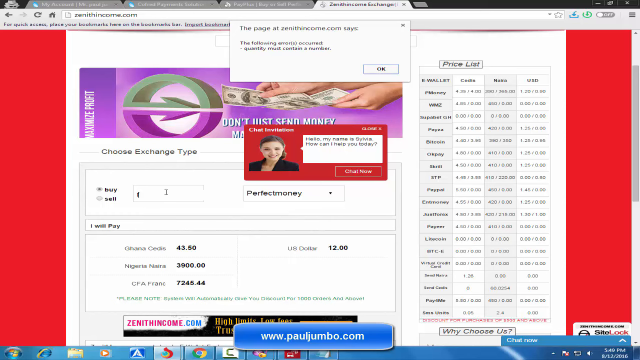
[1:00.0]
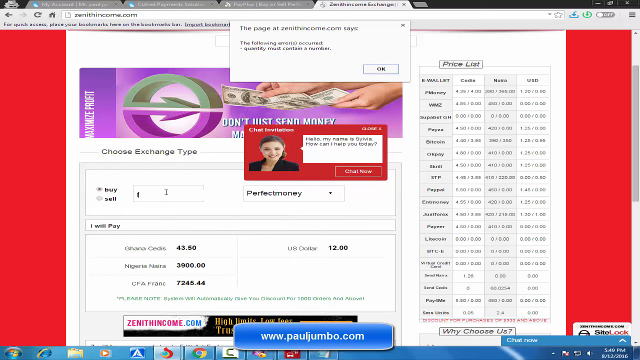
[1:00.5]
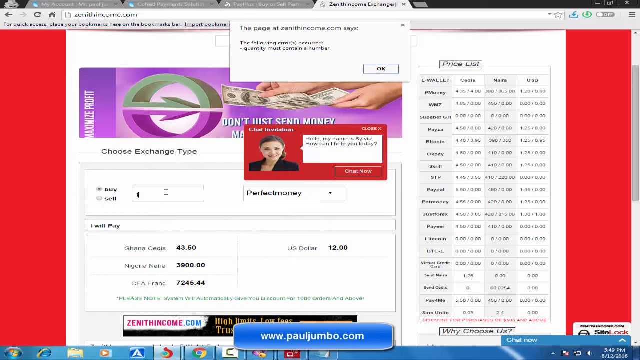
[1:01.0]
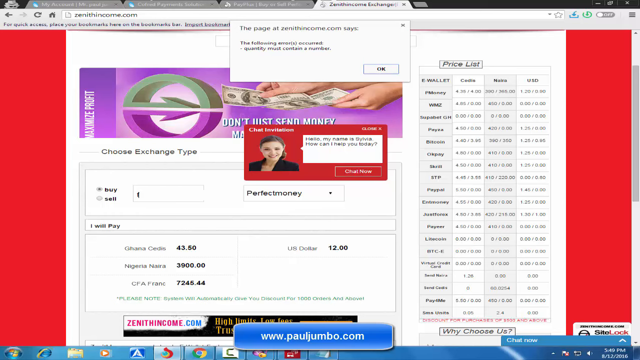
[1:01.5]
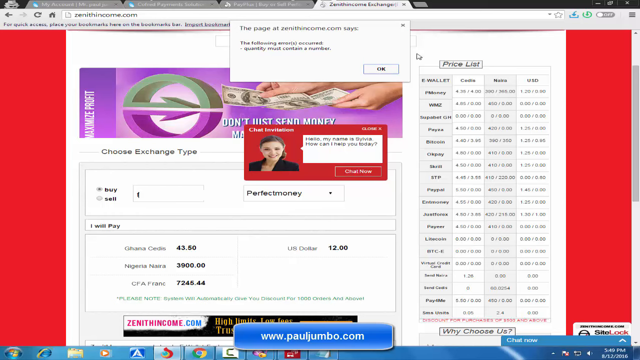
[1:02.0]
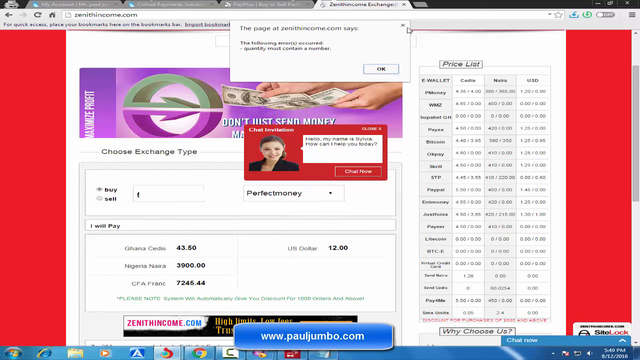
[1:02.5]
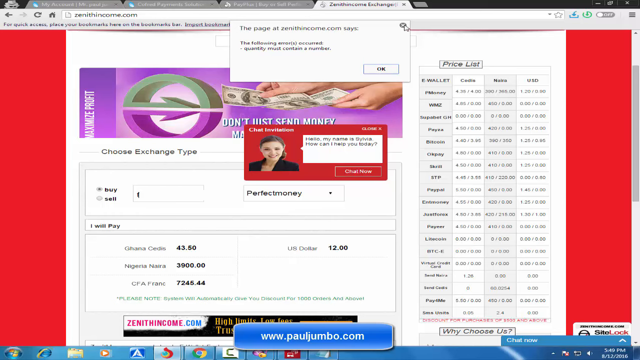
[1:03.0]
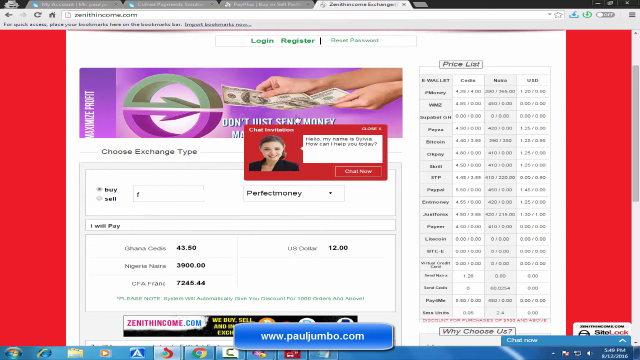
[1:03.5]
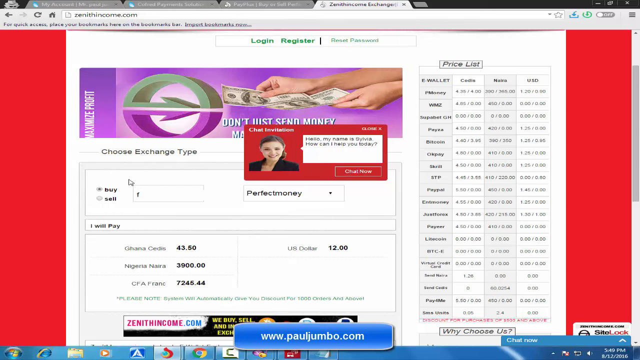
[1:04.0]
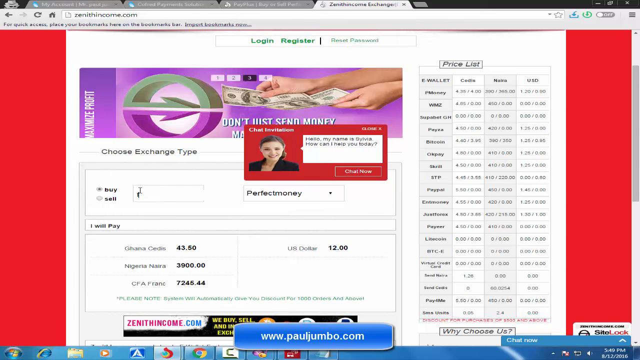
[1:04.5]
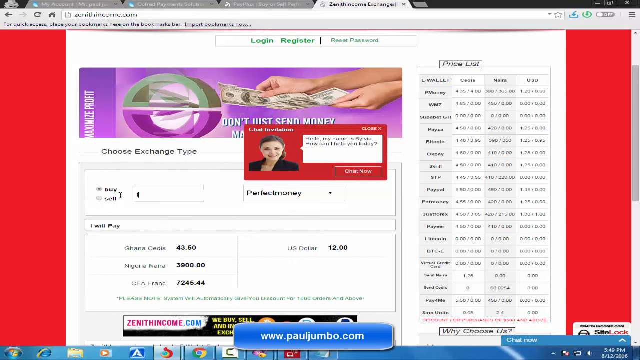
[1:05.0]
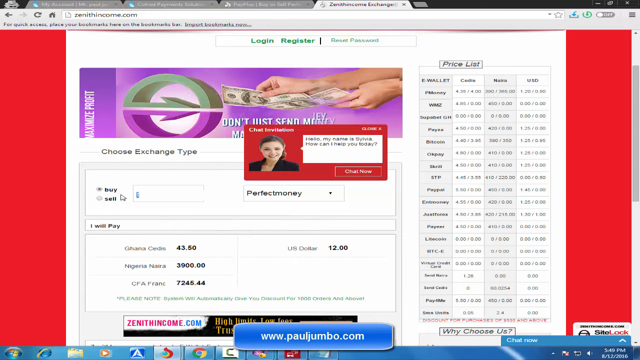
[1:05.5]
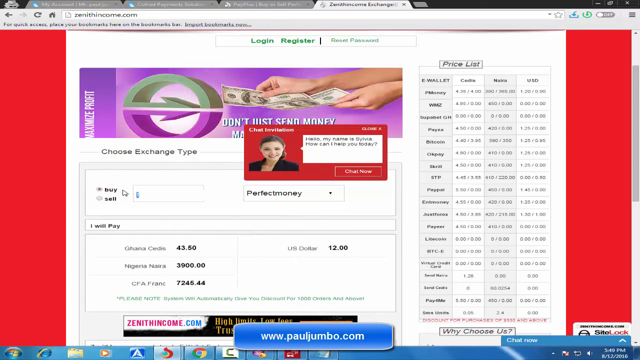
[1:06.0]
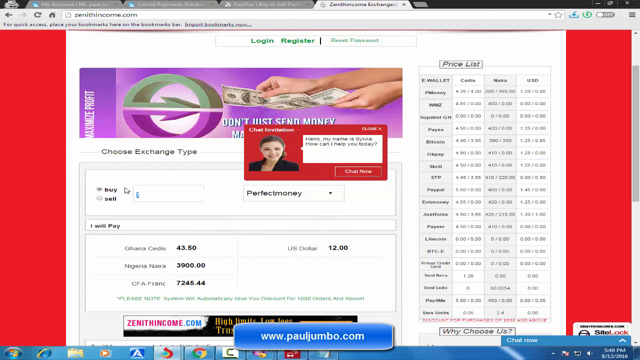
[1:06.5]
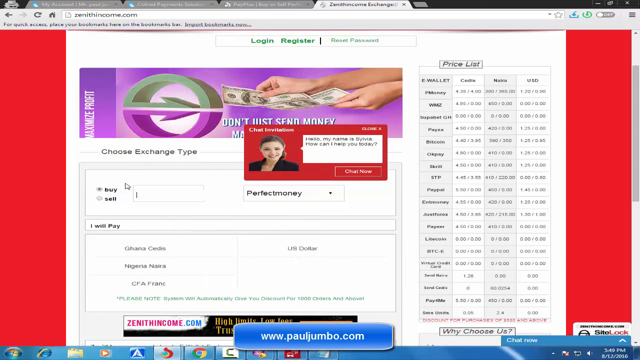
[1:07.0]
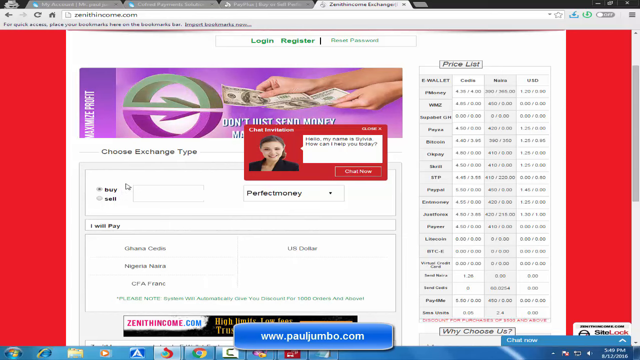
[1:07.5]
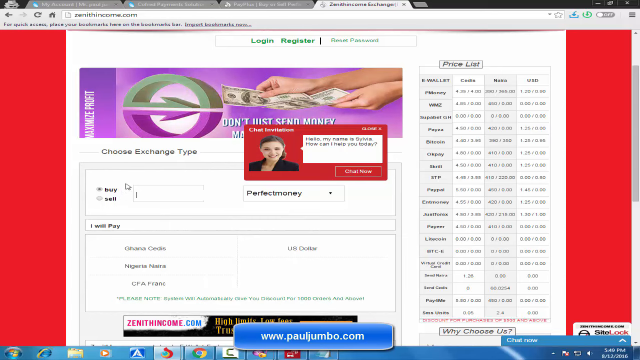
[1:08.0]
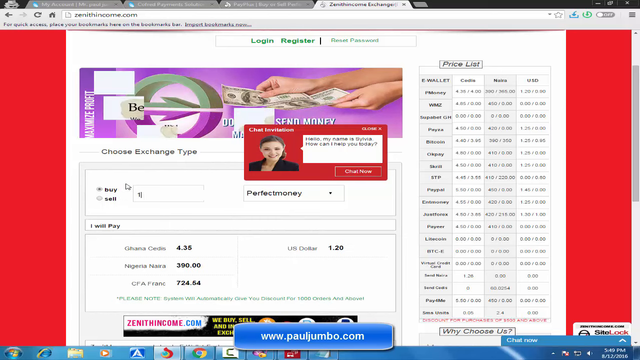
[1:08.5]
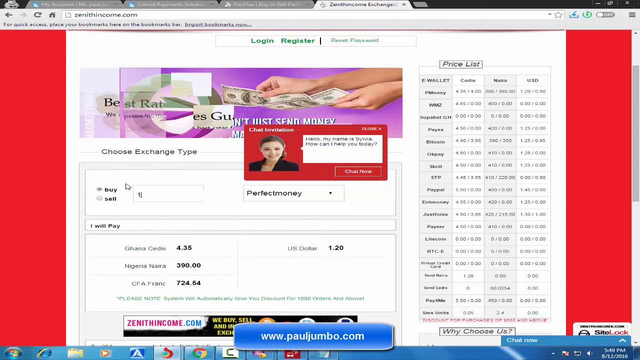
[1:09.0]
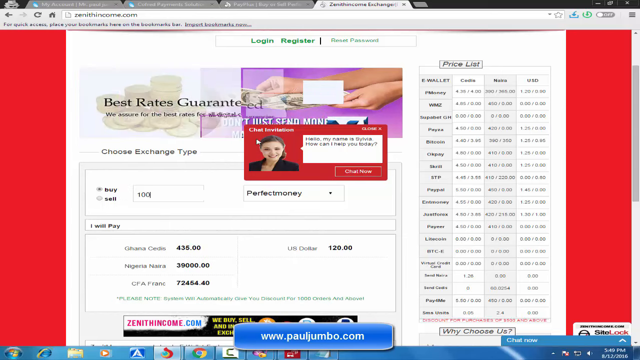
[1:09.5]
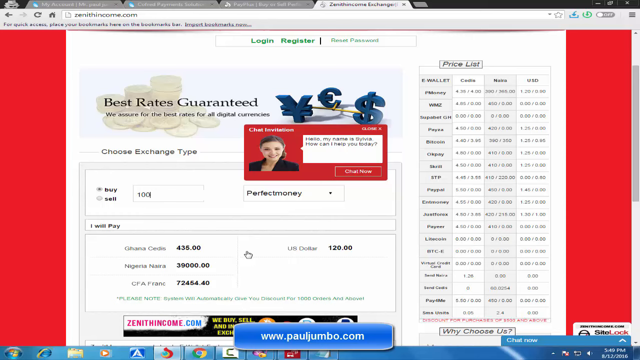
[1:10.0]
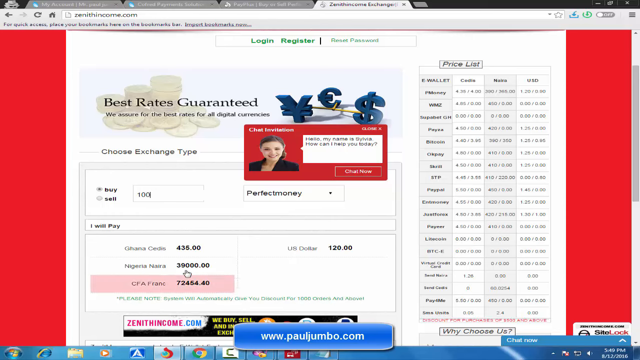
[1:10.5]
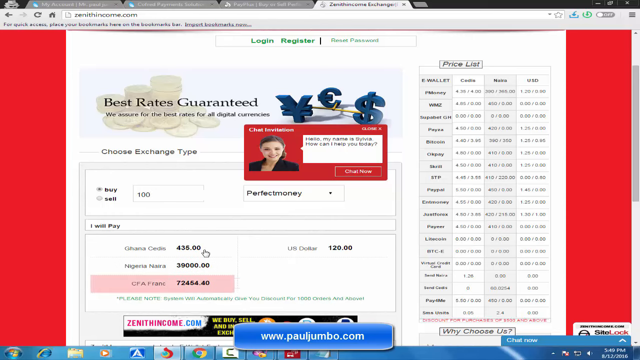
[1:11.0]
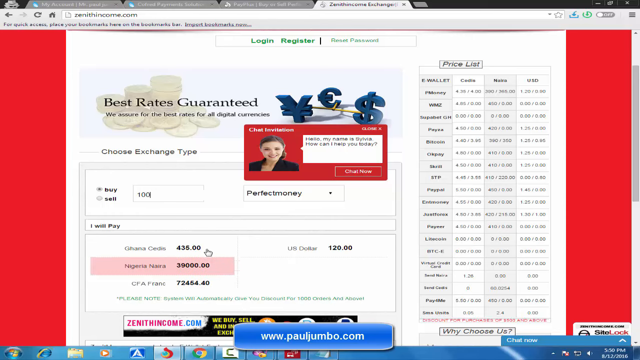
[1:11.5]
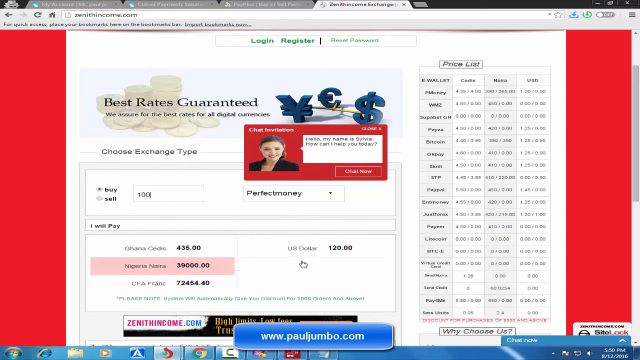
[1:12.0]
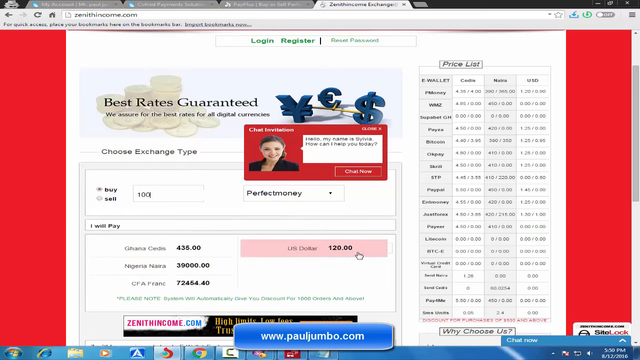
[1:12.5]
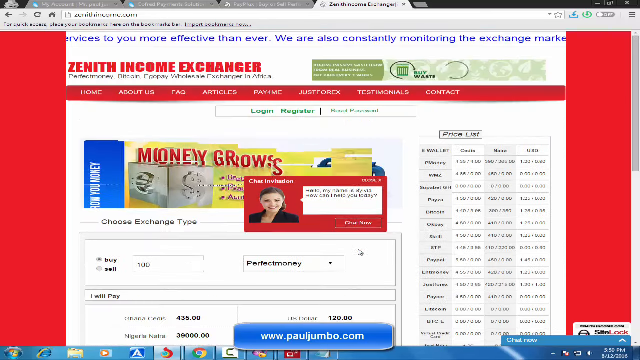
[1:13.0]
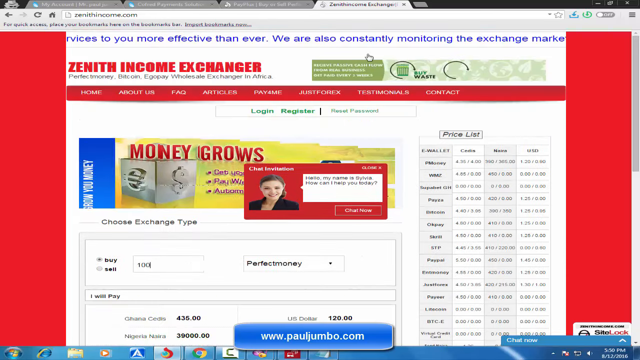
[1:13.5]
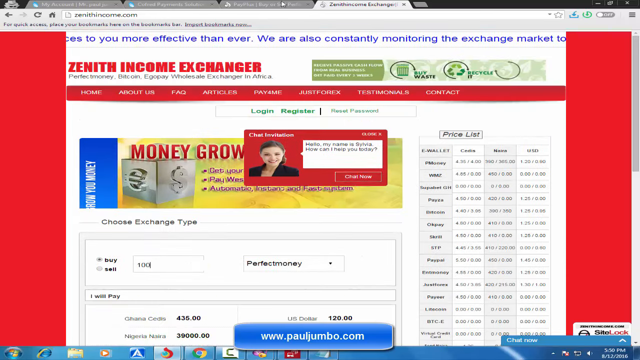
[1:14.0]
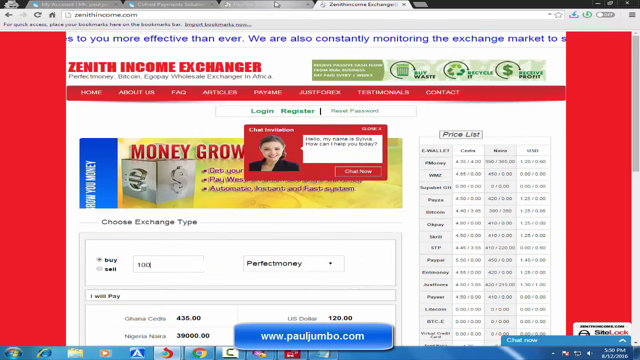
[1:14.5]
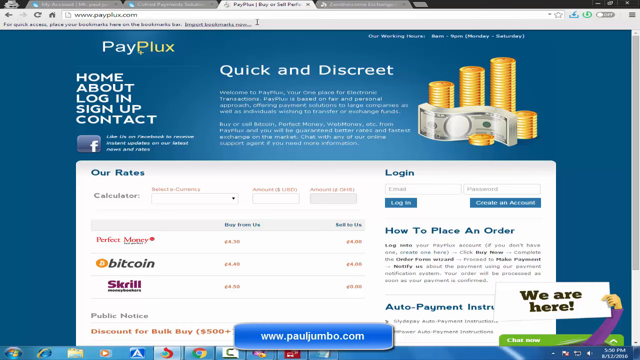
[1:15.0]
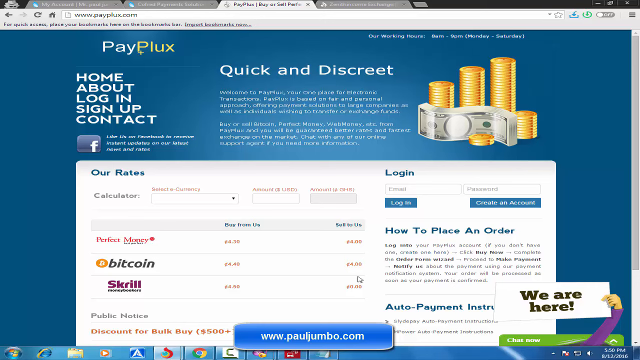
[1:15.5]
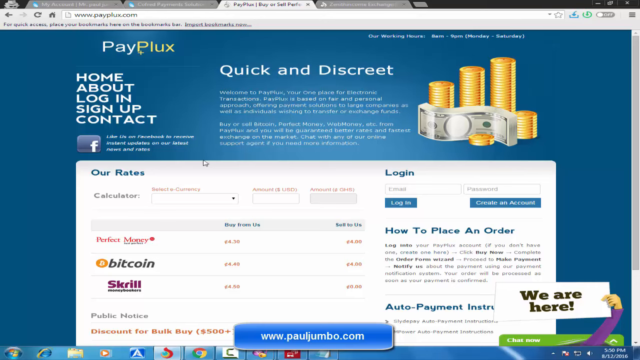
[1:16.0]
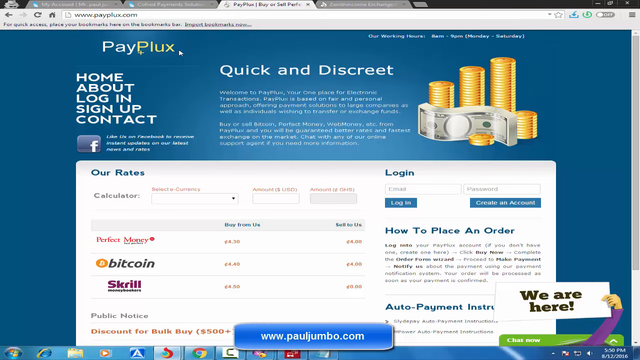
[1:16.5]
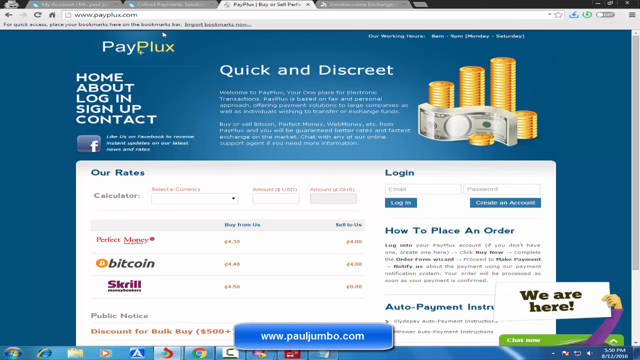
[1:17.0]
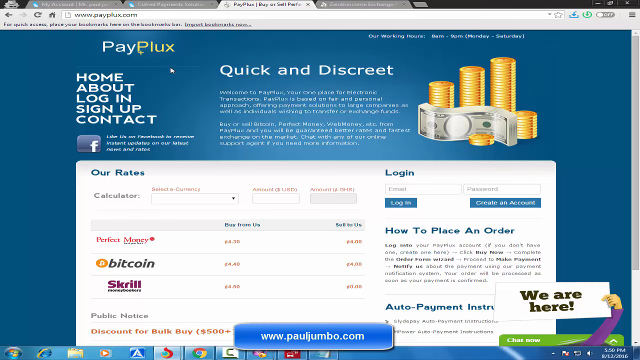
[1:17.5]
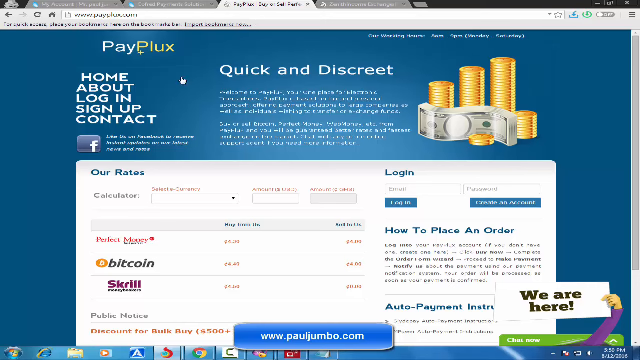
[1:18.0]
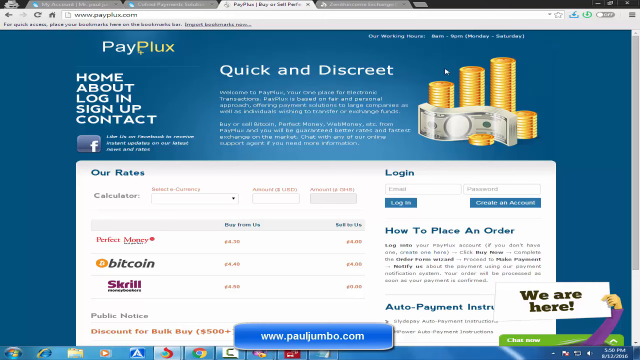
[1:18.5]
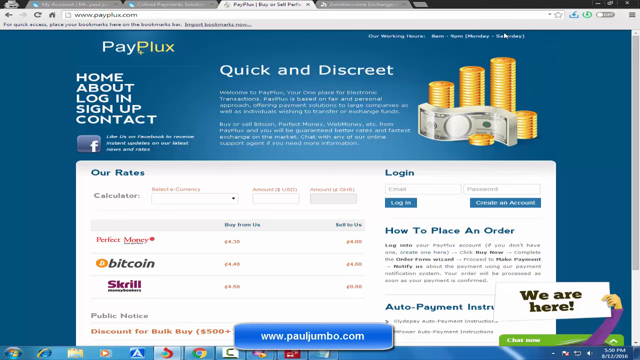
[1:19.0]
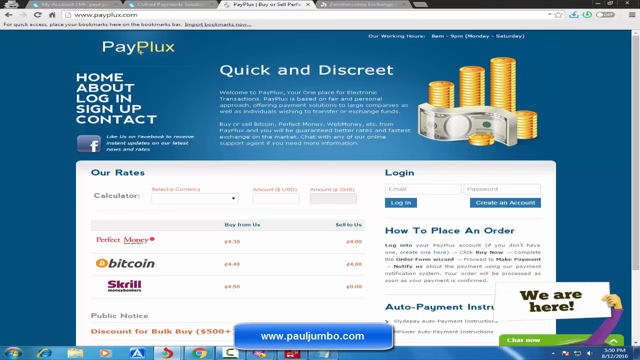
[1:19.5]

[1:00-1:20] A page says "best rates guaranteed", with the letters Y, E and F in green at the very top, and "login, register / forgot password". Further down is a colored rectangular picture with a woman in its left corner, a speech bubble coming from her with very small words. There are solid rust-colored areas on both sides, 1 1⁄8 of an inch from each side toward the middle, where the white paper with the words is. The cursor, turning red, scrolls up and down, moving around the different boxes. The view clicks over to the next page, which says "pay a clock, home, about, login, sign up, or contact". A hand cursor jiggles the word "home" back and forth. To the right of that it says "quick and discreet", with a lot of small writing: four sentences at the top and four sentences at the bottom of a paragraph. To the right are three stacked gold coins, the largest at the top down to the smallest, and a small gold coin in front with what looks like a dollar sign. These are drawn or computer generated, not real.